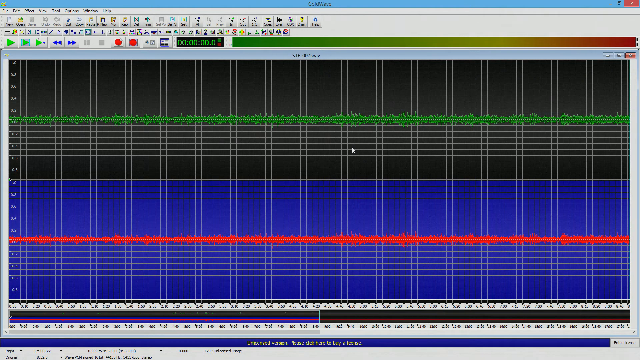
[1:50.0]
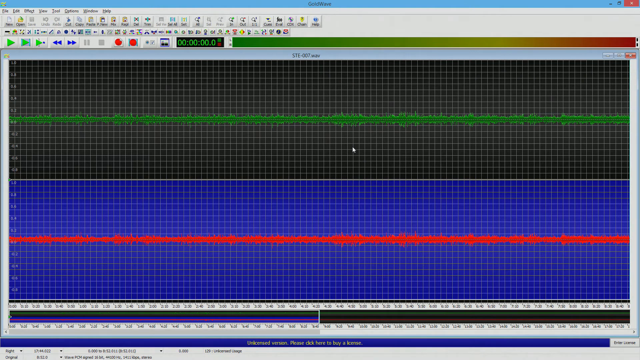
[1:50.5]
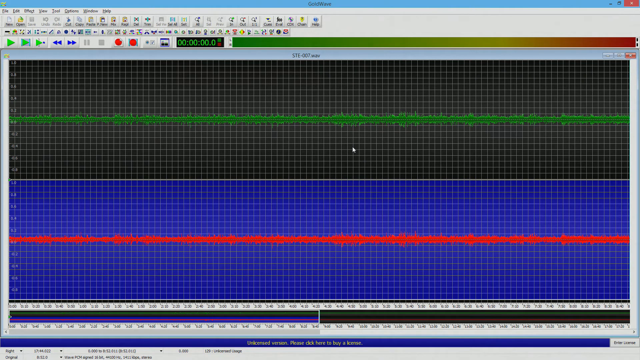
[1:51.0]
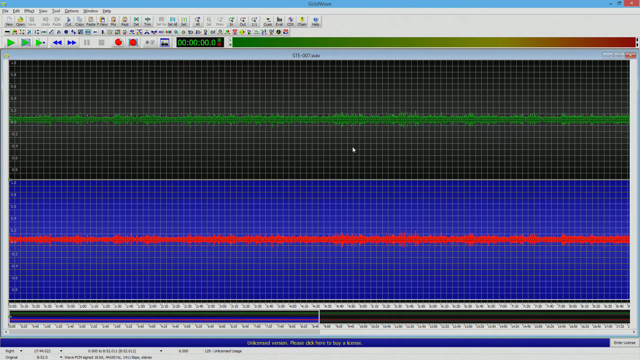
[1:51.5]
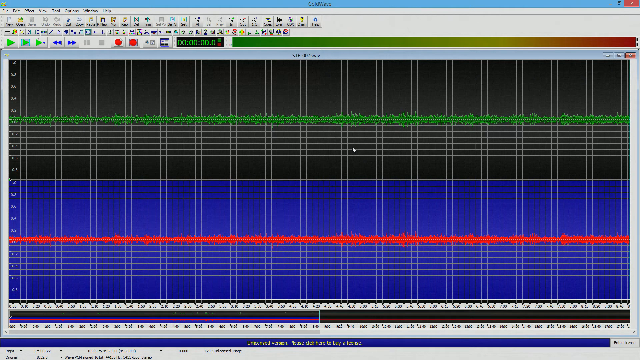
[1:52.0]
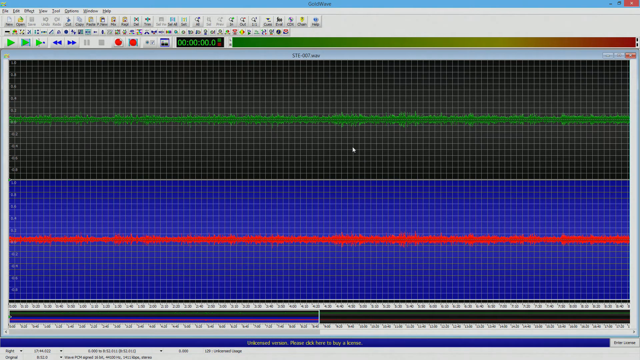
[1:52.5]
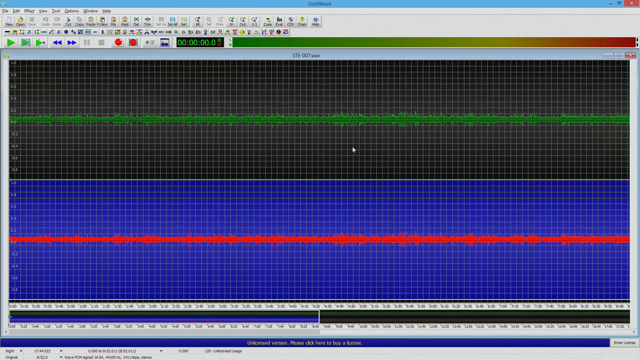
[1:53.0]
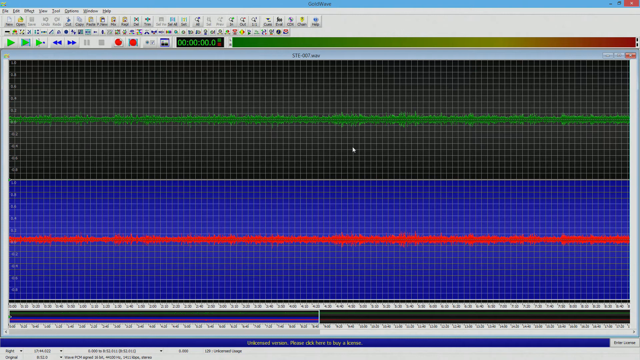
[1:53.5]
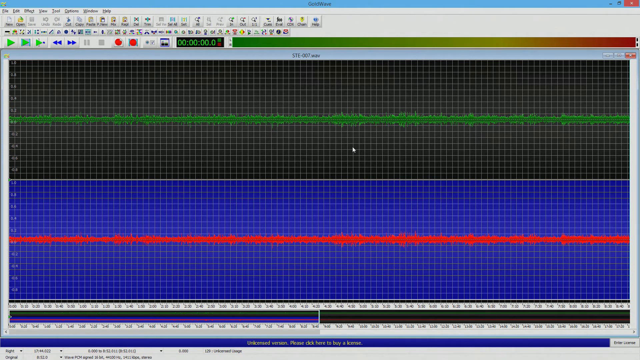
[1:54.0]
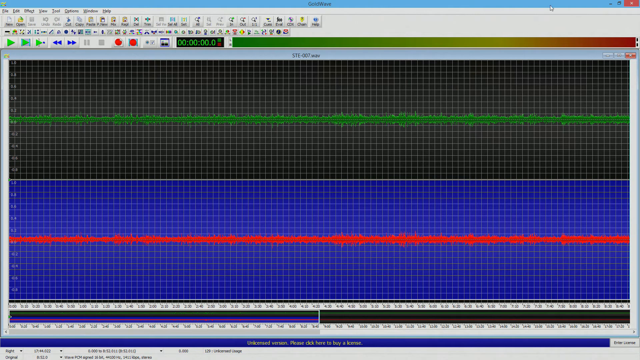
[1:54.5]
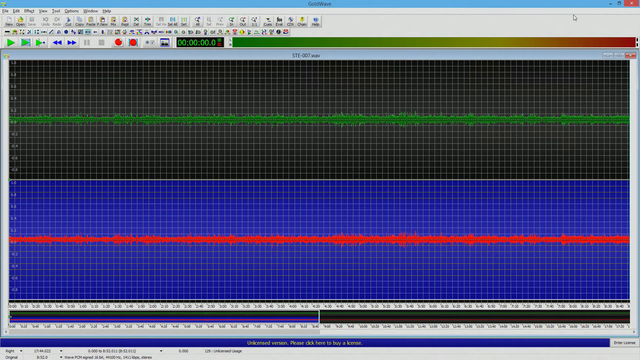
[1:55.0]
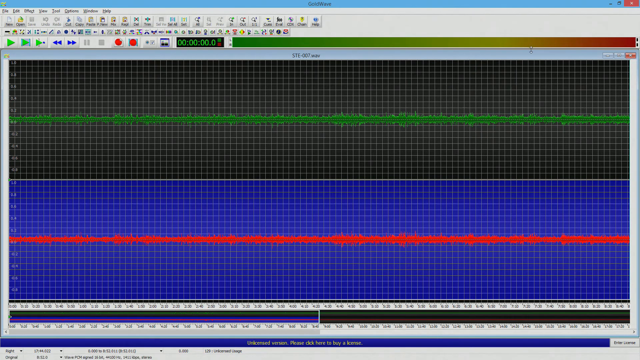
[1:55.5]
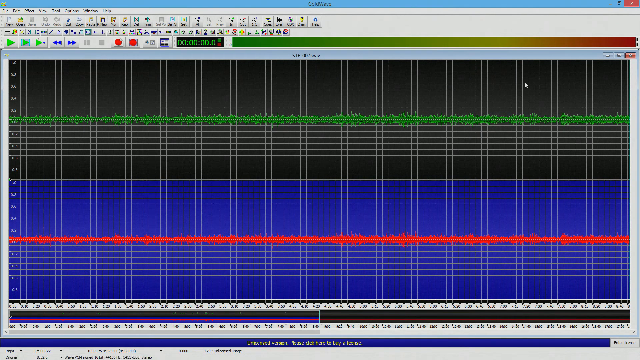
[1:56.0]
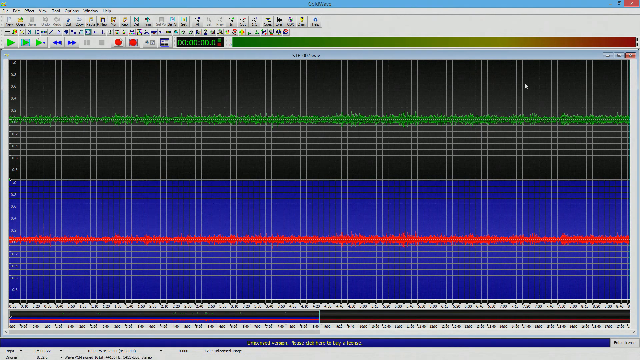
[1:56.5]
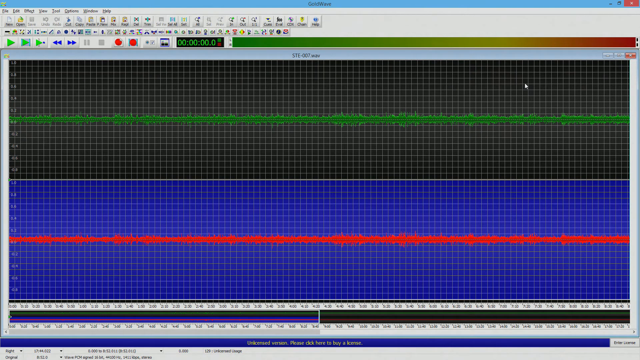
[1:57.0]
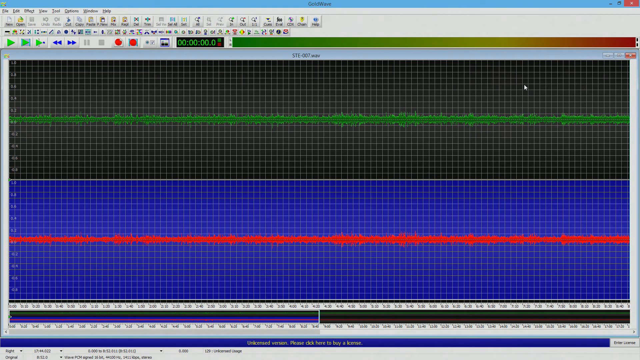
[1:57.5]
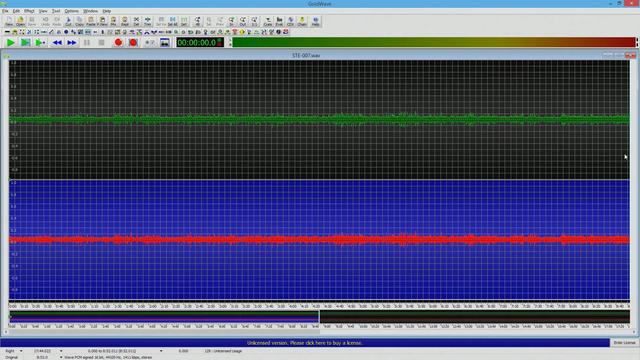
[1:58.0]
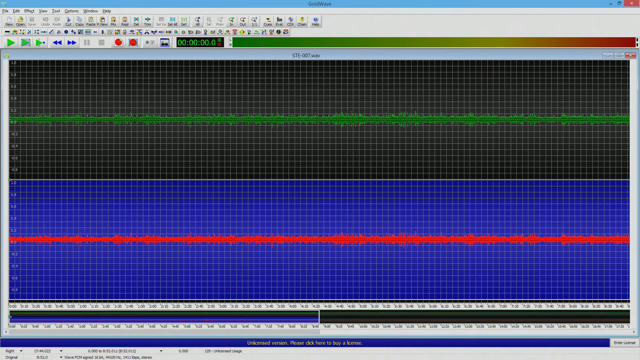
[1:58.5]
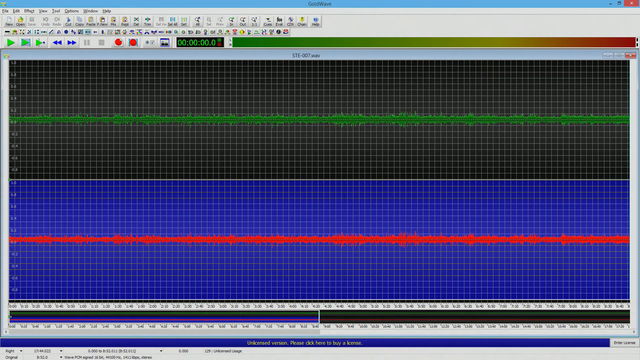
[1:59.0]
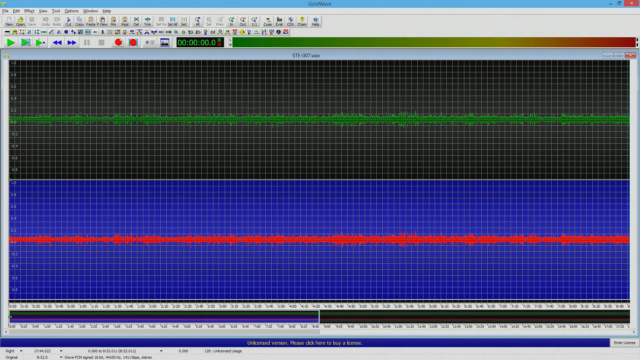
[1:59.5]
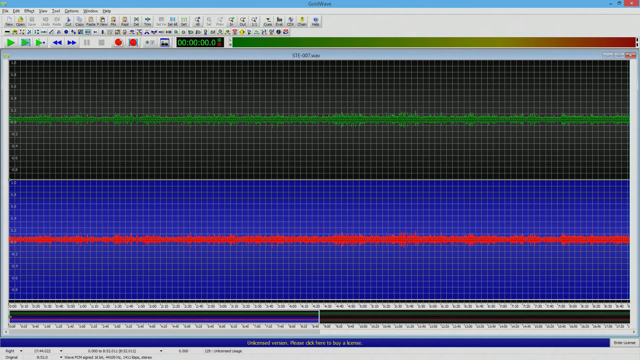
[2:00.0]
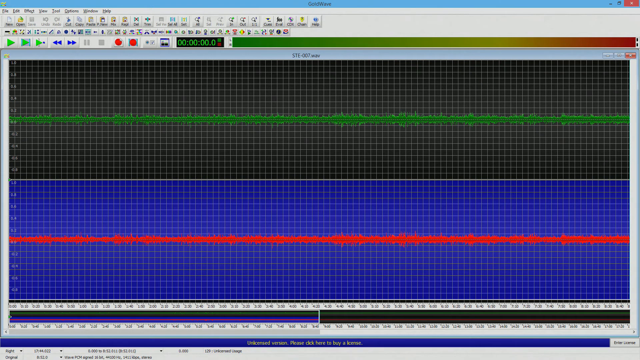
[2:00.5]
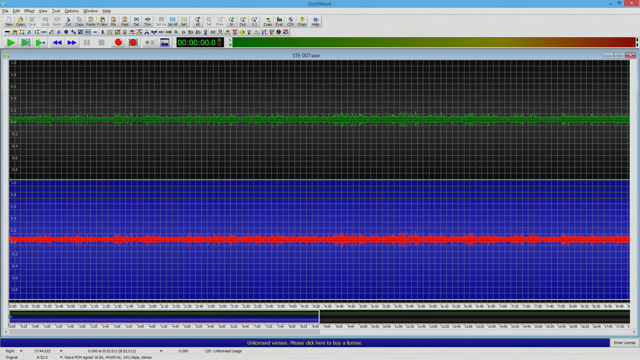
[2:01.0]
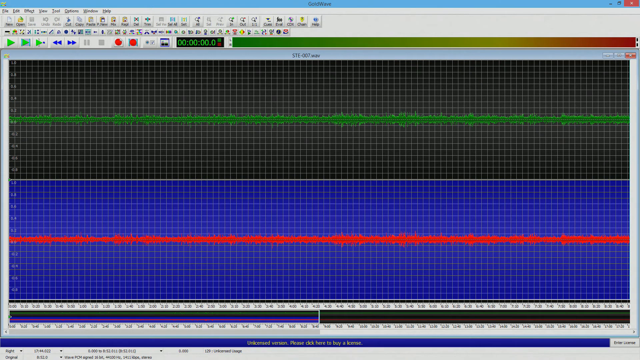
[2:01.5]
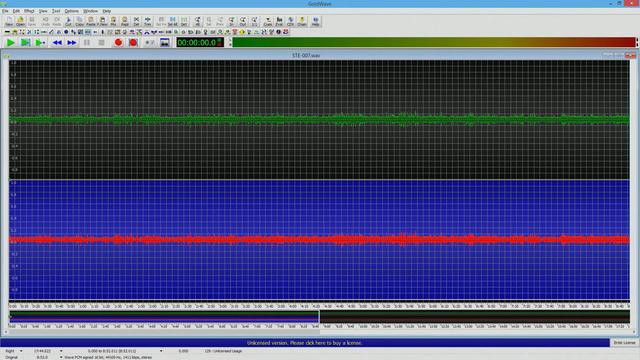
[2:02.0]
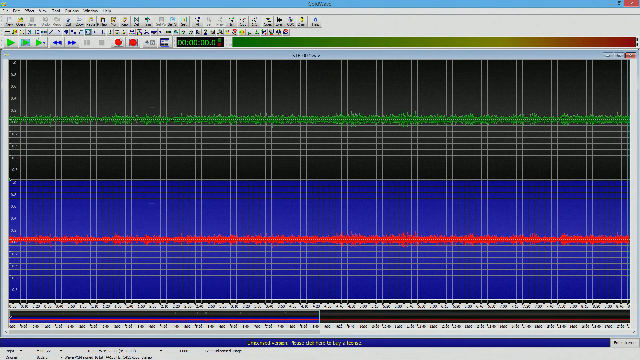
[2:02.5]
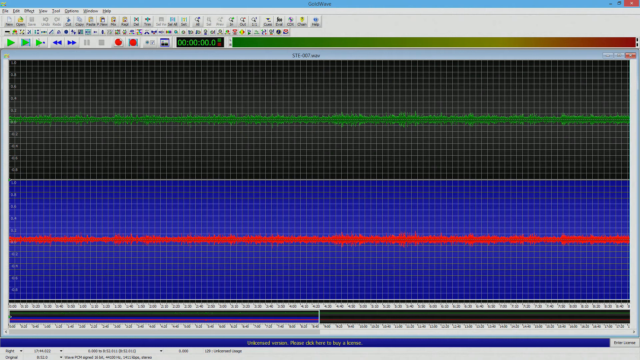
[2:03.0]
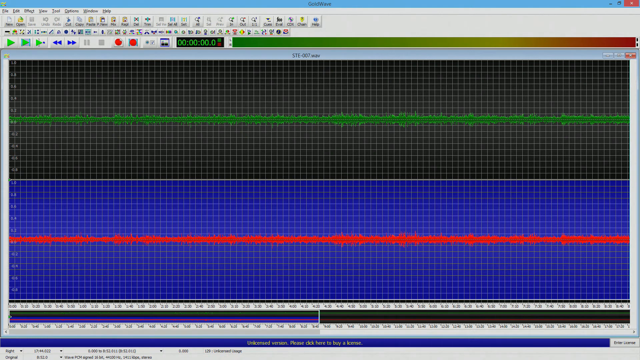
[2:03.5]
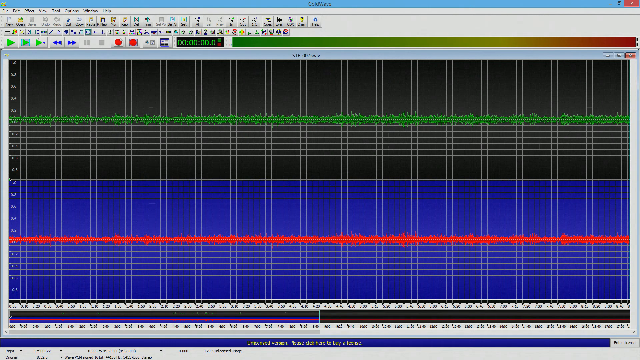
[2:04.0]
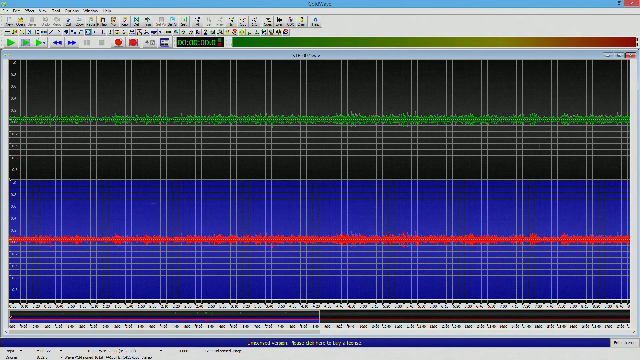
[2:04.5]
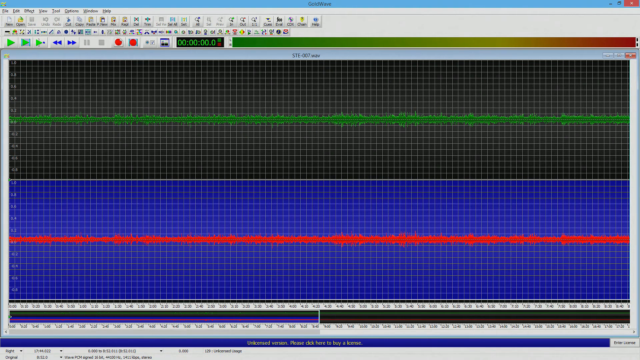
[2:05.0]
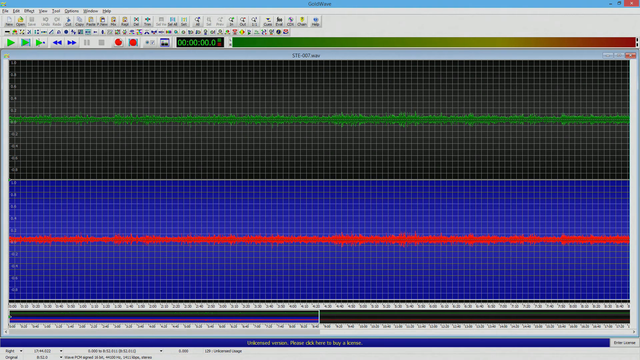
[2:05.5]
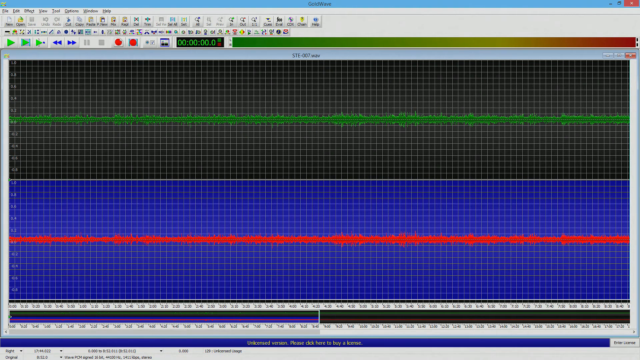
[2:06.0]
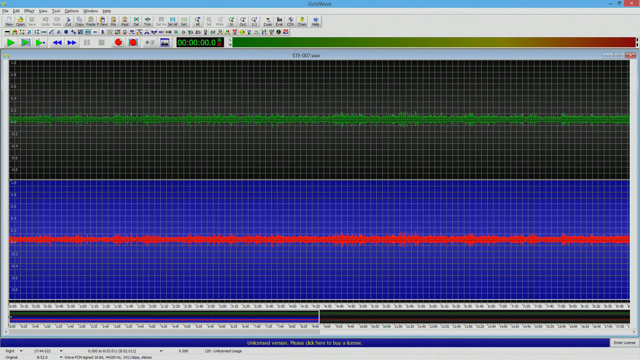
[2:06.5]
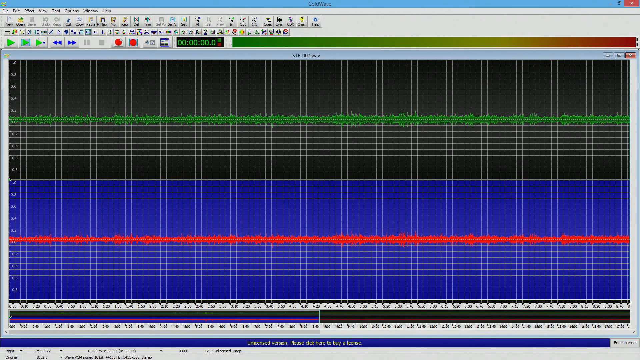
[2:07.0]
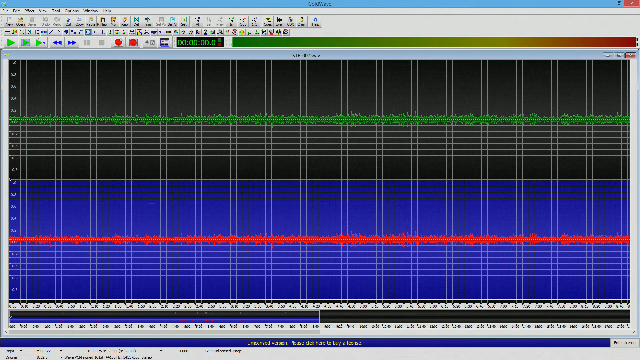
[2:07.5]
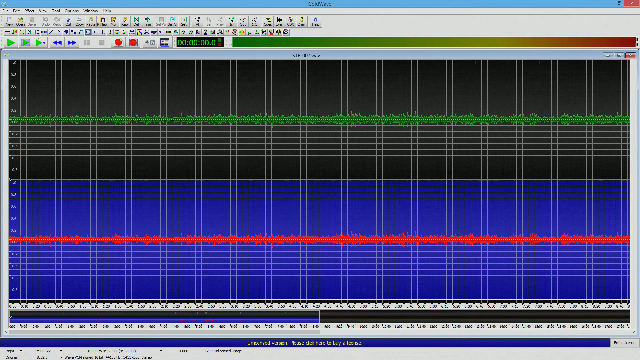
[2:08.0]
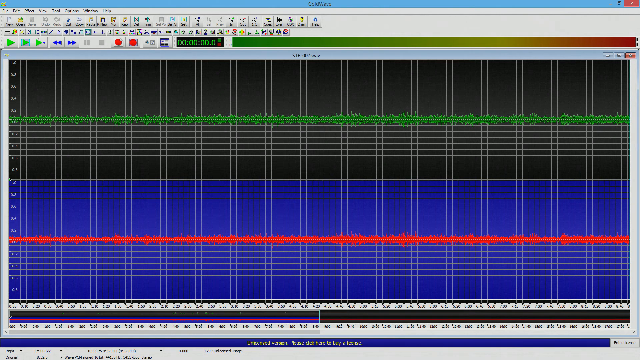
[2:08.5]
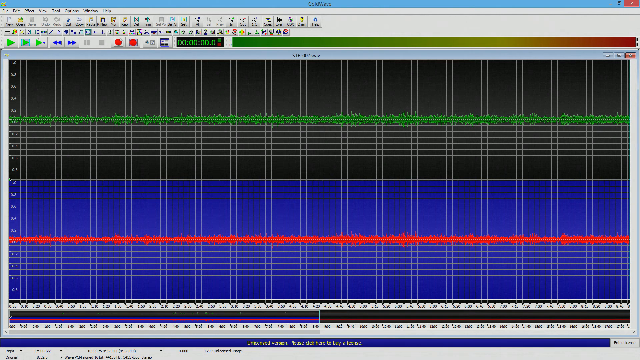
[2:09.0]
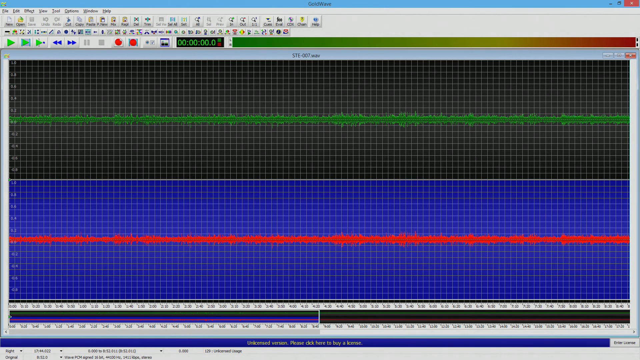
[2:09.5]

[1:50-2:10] A computer screen is divided into two: the upper portion is dark and the bottom portion is a light purplish blue. A green line runs across the upper portion and a red line across the bottom portion. The background looks almost like graph paper, with very small squares put together. A light gray line runs from left to right, and numbers run down the left side the entire length of the page. At the bottom are two white bars, each with numbers along the entire bottom of the screen. The cursor moves rapidly up and down around the screen and hovers around the green line. It is very hard to see, appearing as a small white dot although it is an arrow.